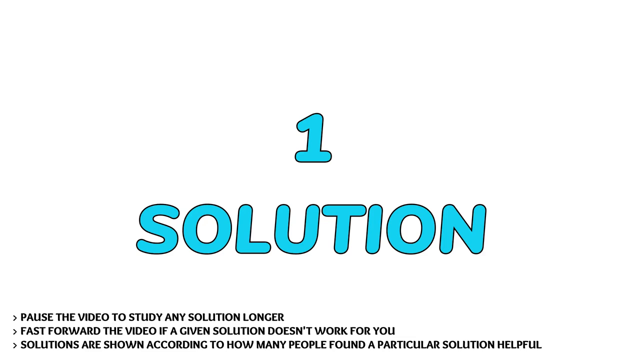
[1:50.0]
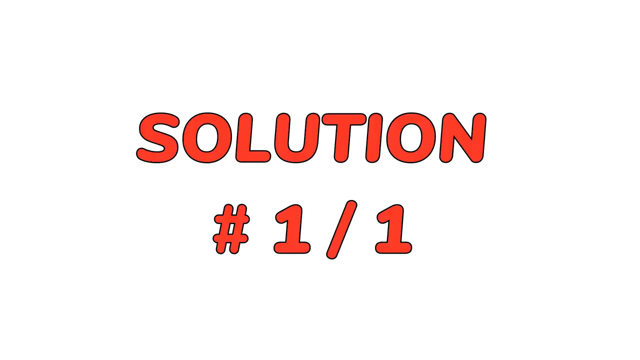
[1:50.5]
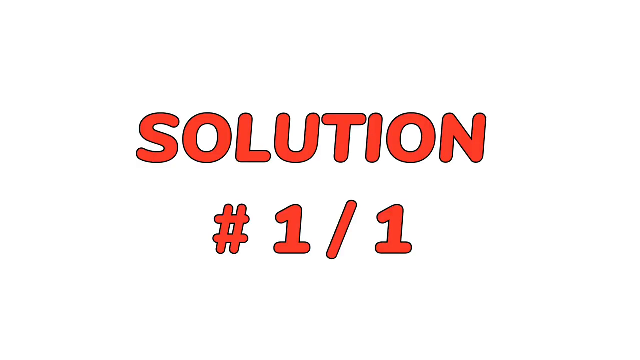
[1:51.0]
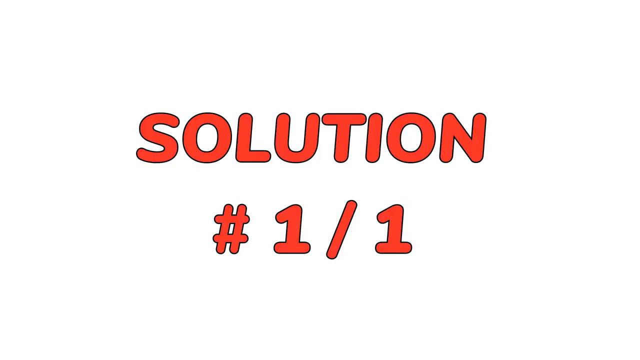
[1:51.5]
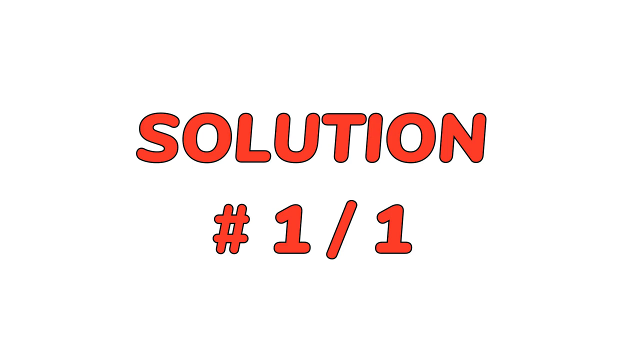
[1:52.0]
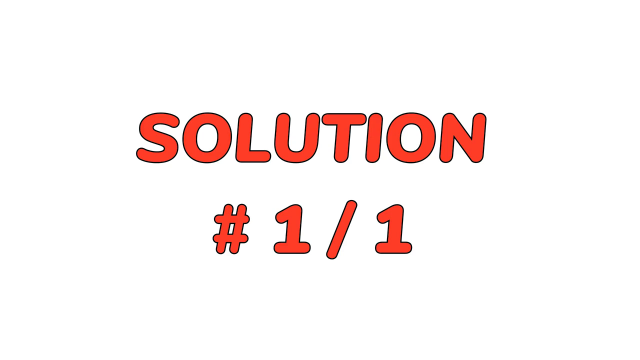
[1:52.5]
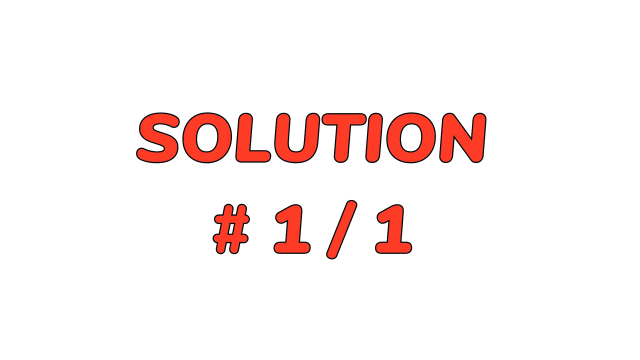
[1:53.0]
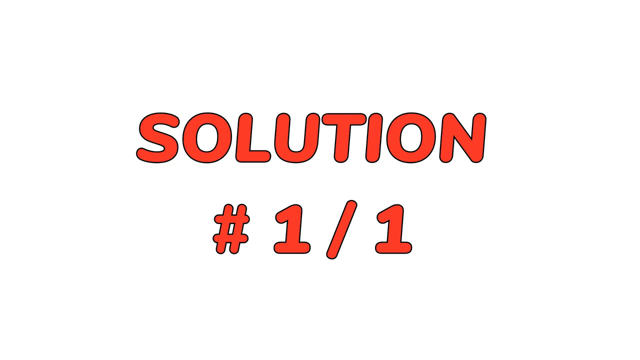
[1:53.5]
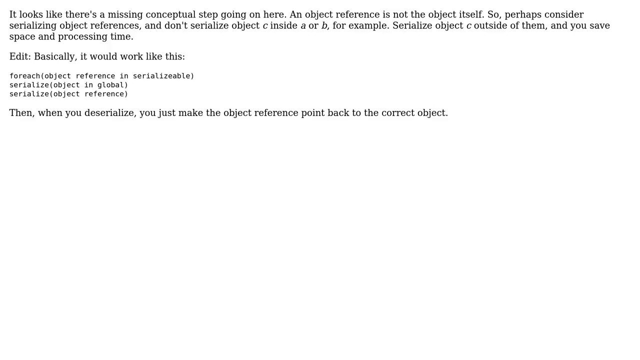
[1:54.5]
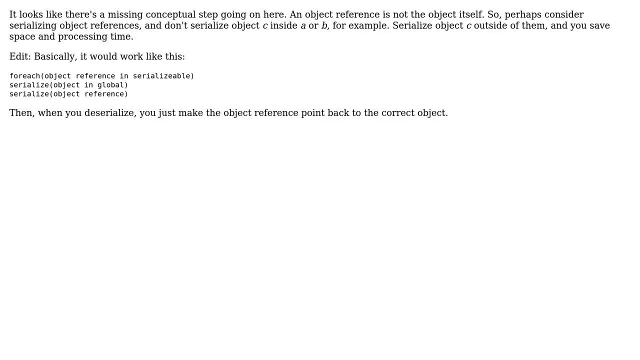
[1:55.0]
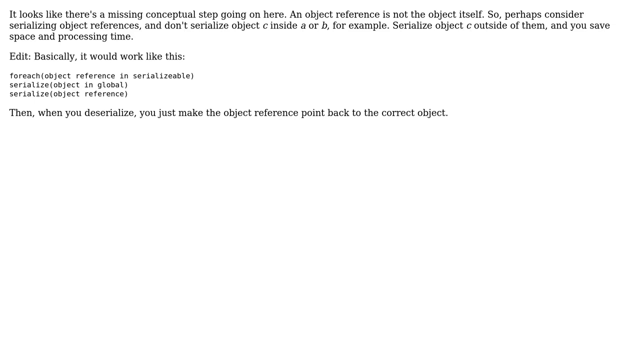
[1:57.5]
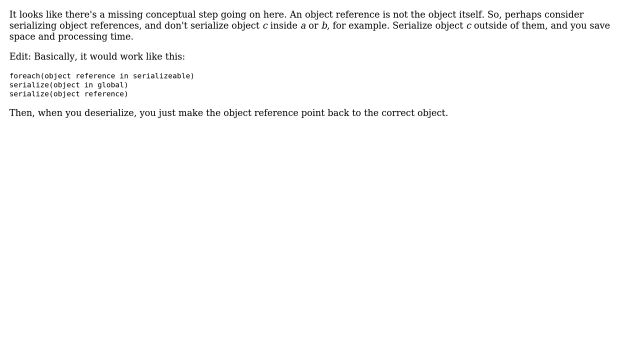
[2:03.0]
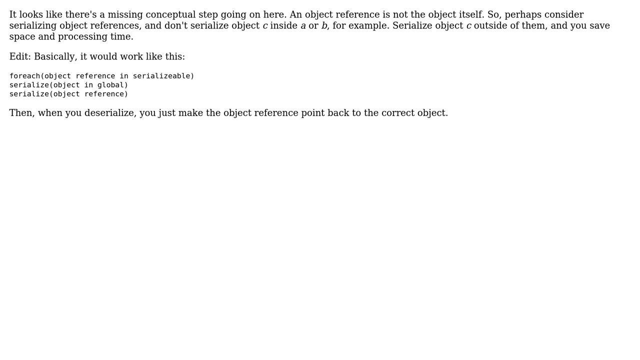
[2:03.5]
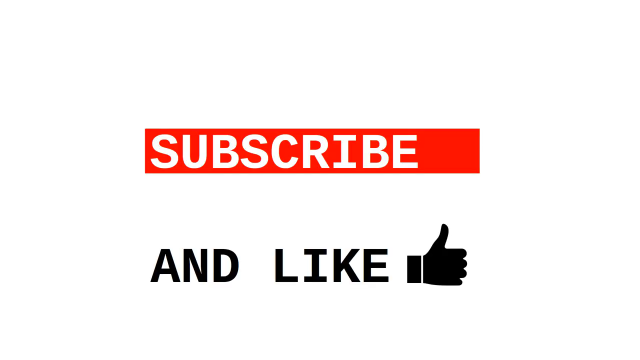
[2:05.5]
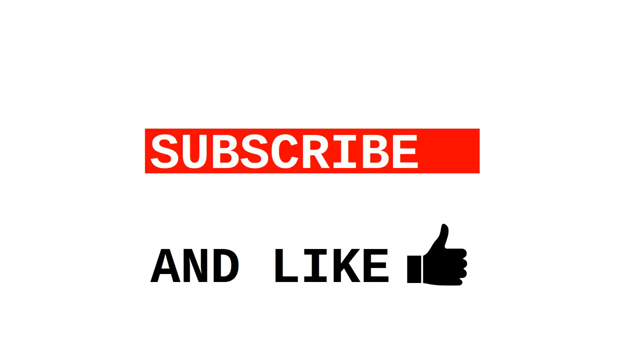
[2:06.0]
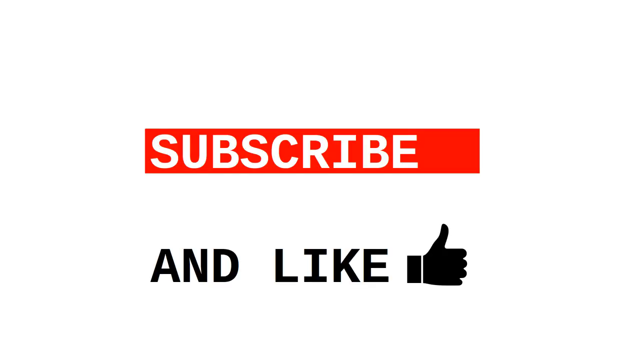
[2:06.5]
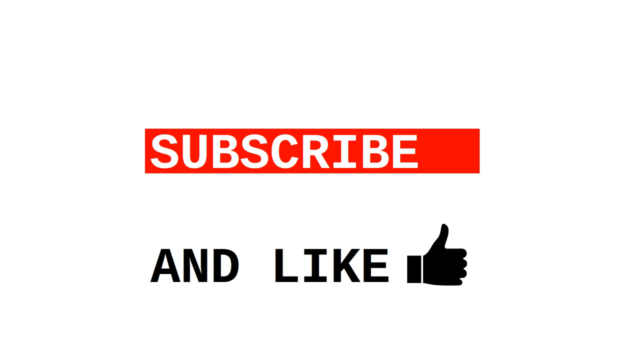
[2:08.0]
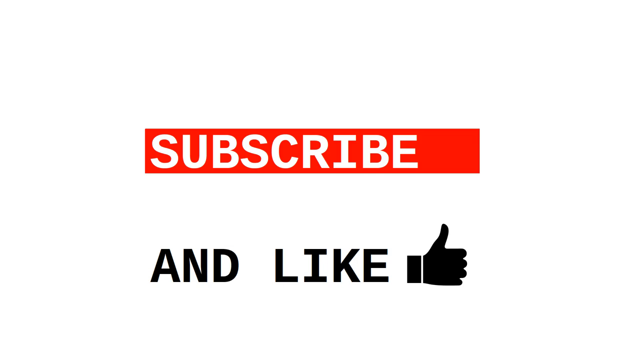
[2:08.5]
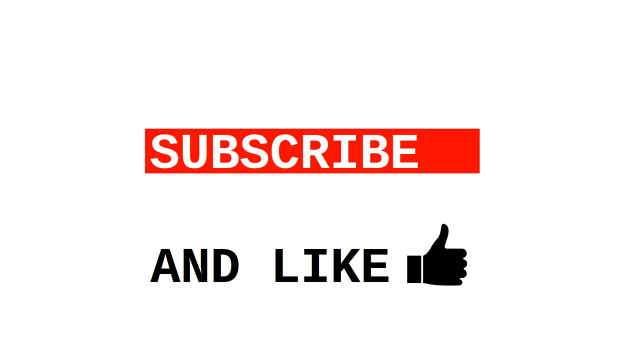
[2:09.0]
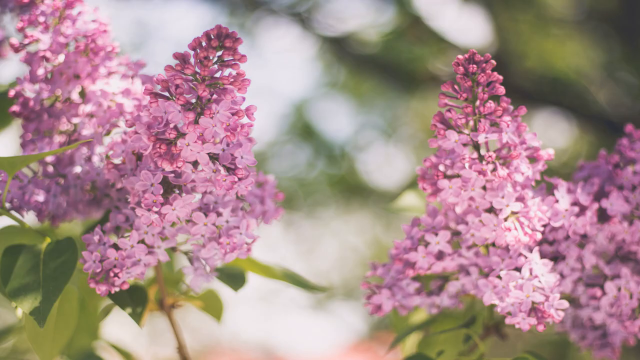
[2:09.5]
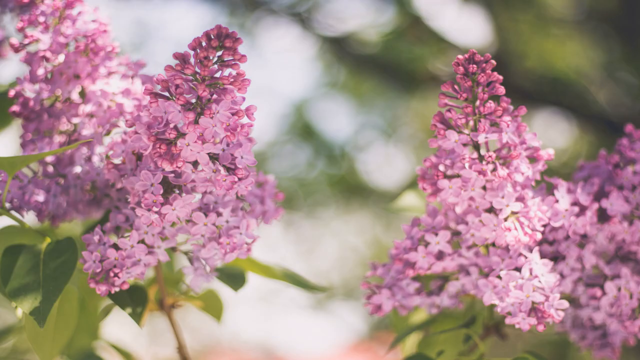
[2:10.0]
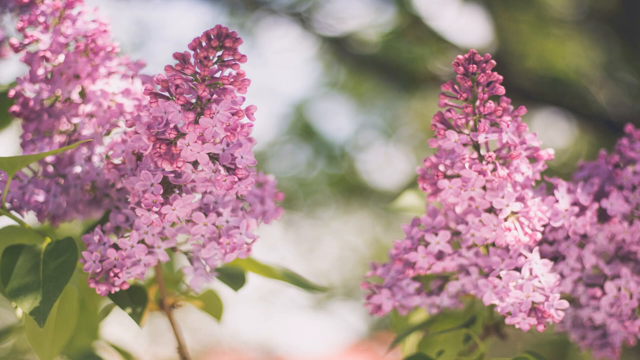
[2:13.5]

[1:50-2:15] "Solution number one/one" appears in red capital letters on a blank white screen. The screen then changes to white with paragraphs of text. At the top it says "it looks like there's a missing conceptual step going on here and object reference is not the object itself. So perhaps consider serializing object references and don't serialize object C inside A or B for example serialize object C outside of them and you save space and processing time," followed by more text about how this would work. Finally a blank white screen asks viewers to subscribe and like the channel: "subscribe" is written in white inside a red rectangular box, and "like" is written in black with a black thumbs-up next to it. All the words are in capital letters.